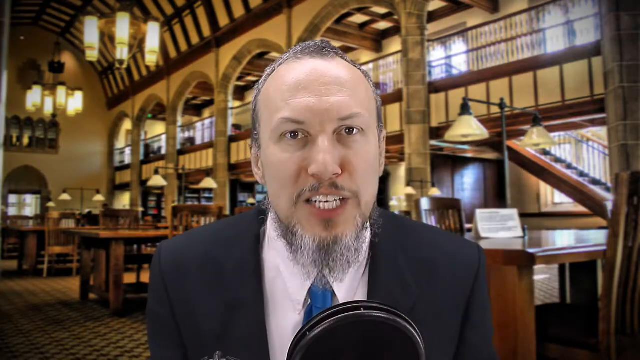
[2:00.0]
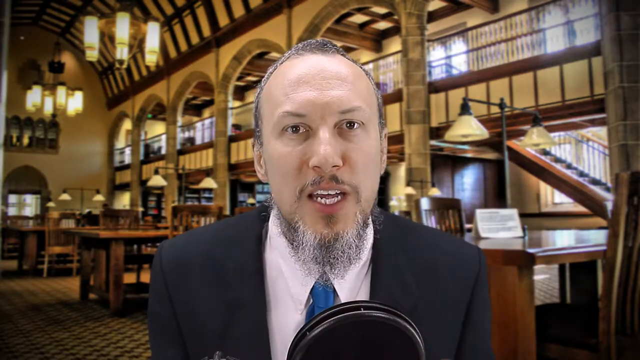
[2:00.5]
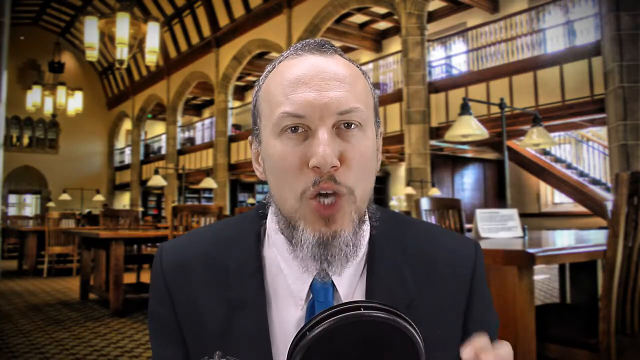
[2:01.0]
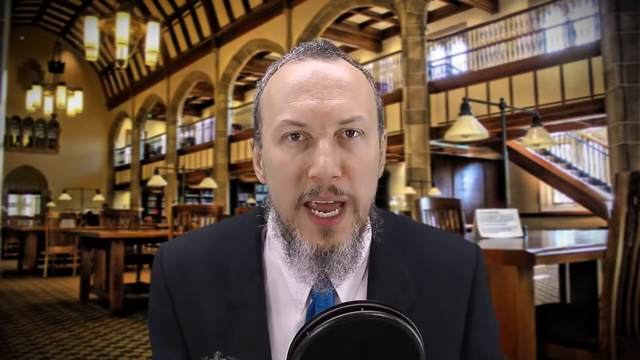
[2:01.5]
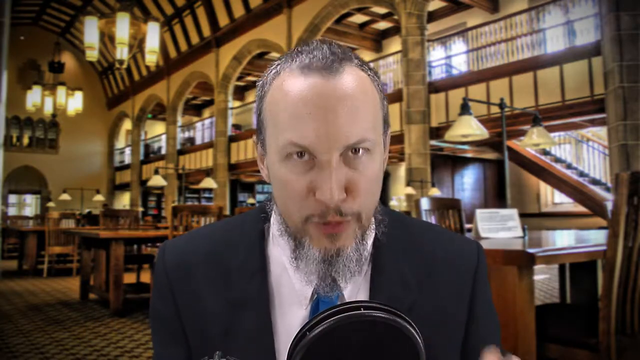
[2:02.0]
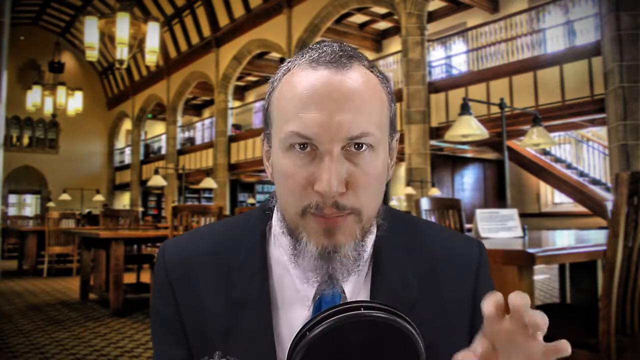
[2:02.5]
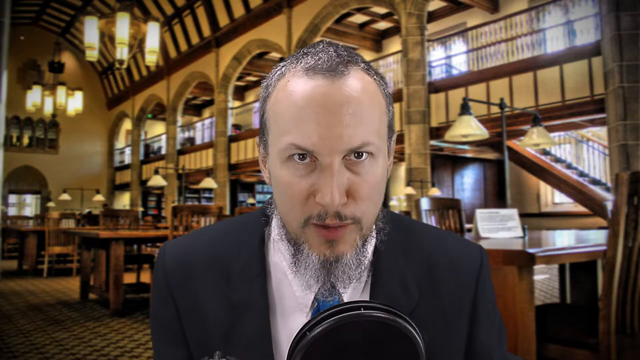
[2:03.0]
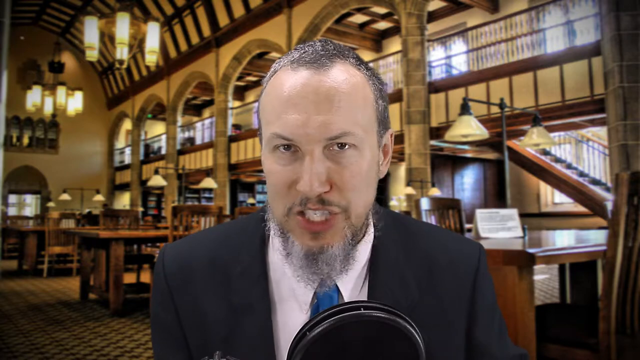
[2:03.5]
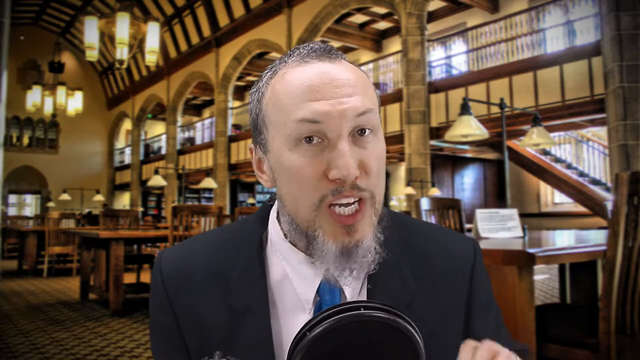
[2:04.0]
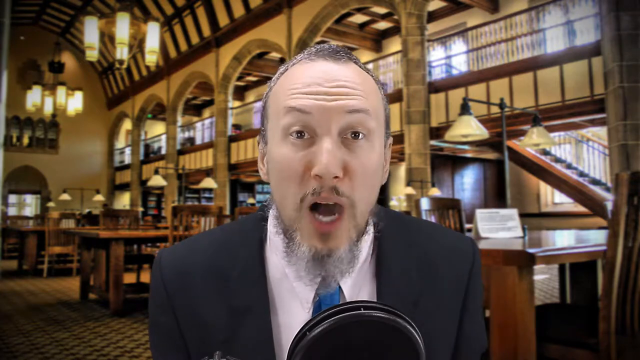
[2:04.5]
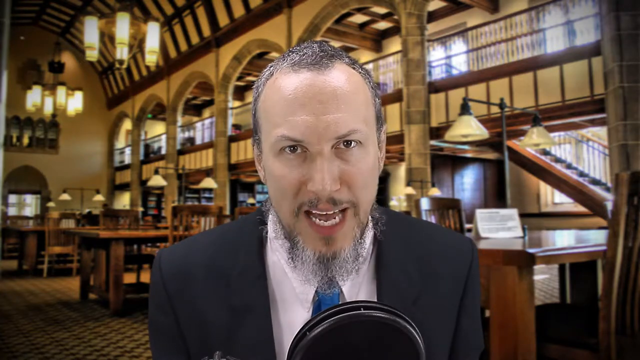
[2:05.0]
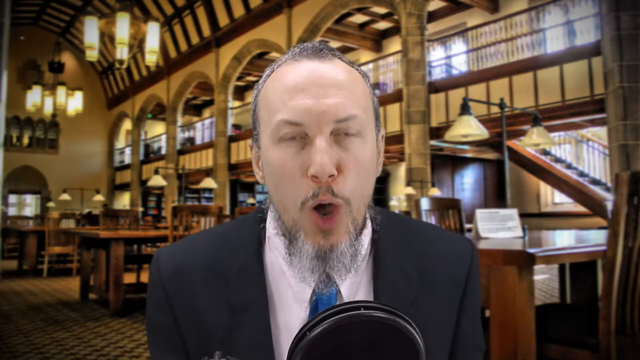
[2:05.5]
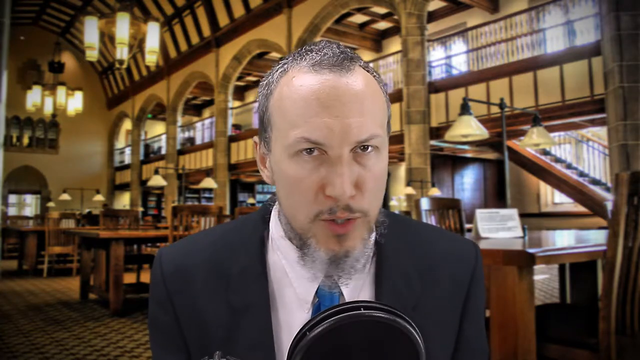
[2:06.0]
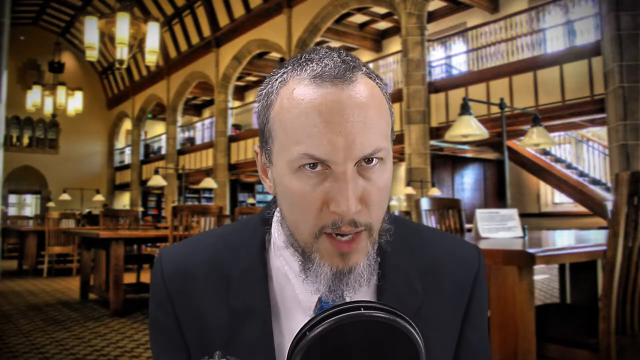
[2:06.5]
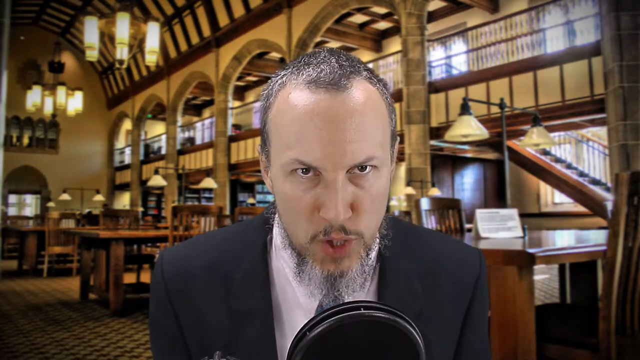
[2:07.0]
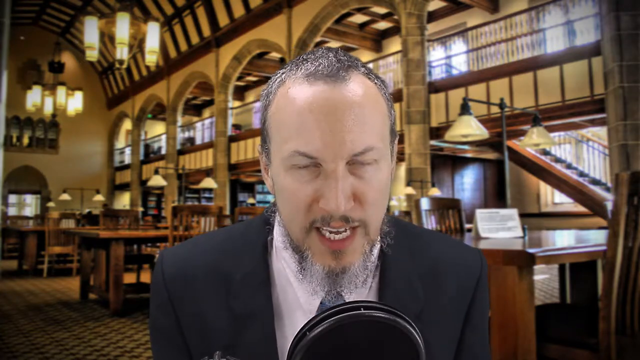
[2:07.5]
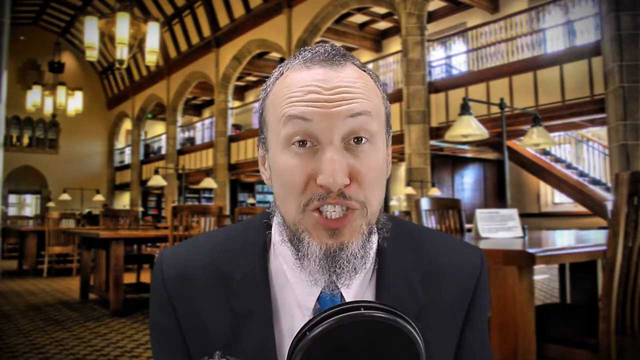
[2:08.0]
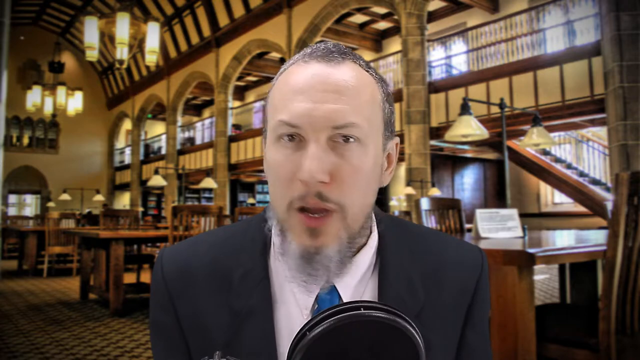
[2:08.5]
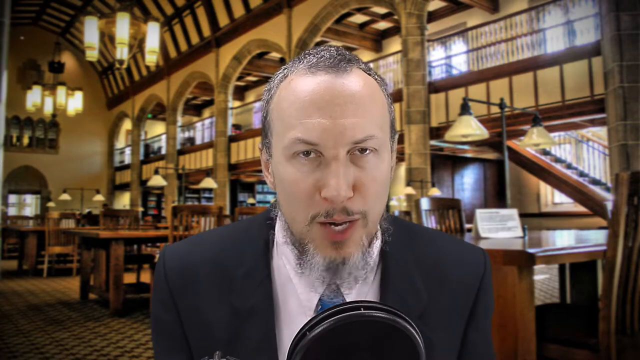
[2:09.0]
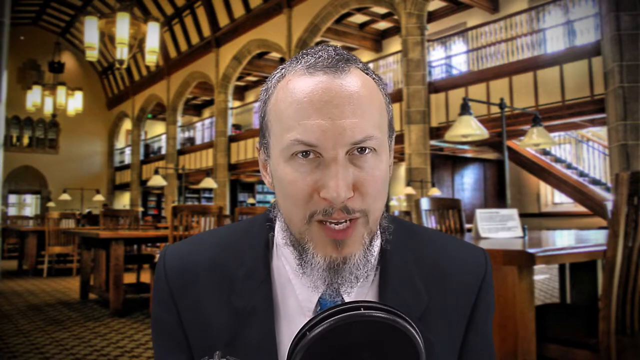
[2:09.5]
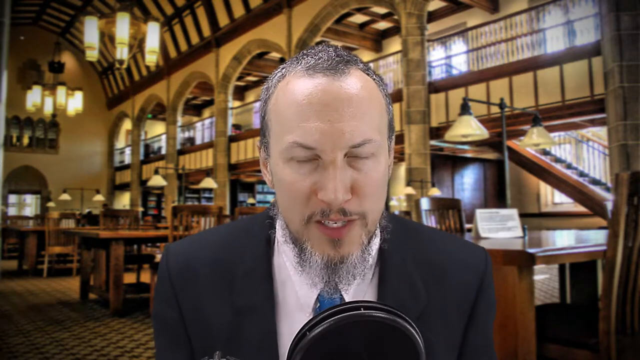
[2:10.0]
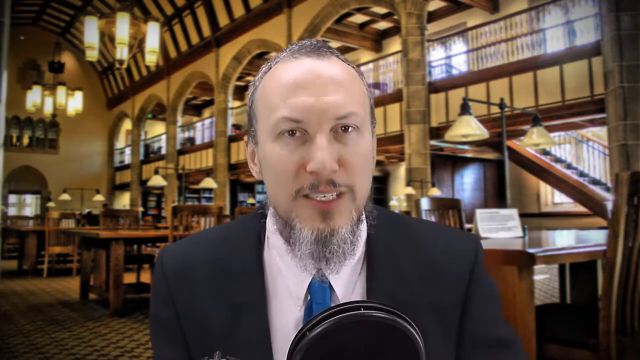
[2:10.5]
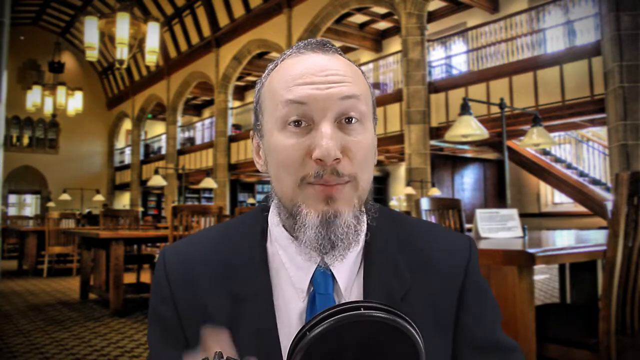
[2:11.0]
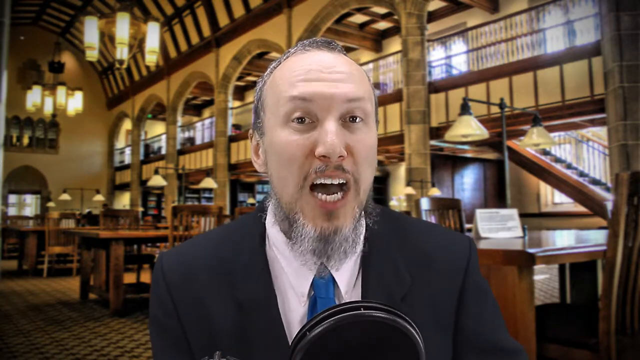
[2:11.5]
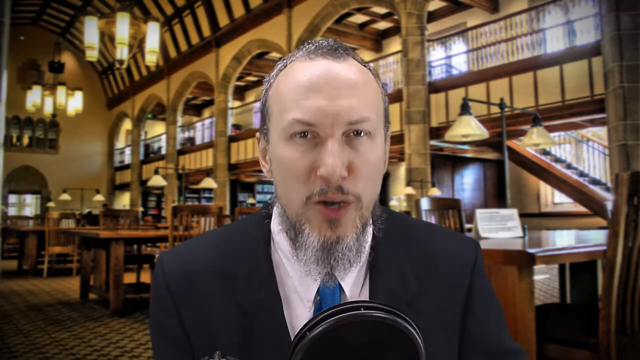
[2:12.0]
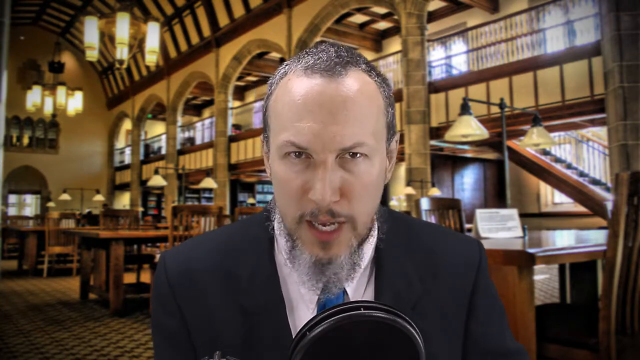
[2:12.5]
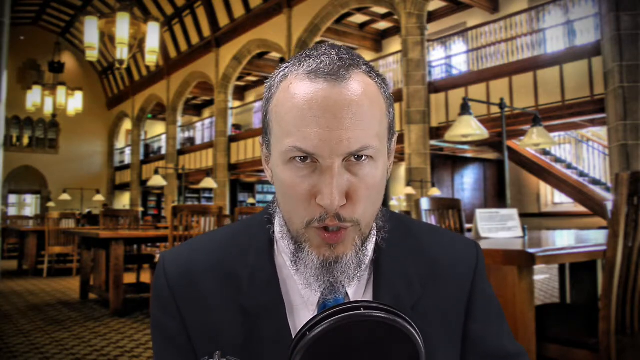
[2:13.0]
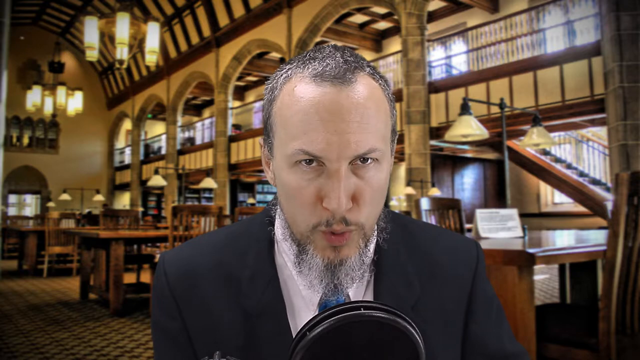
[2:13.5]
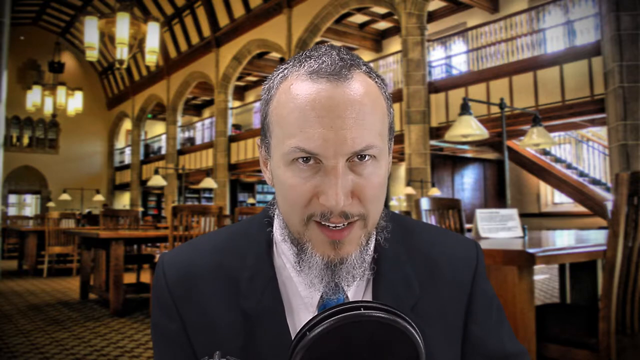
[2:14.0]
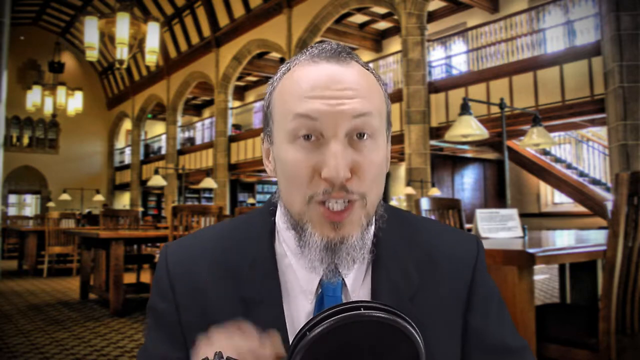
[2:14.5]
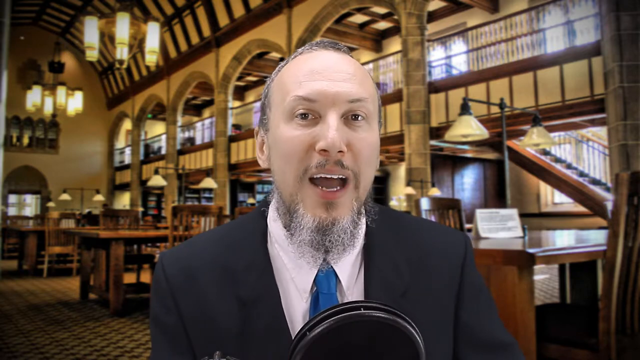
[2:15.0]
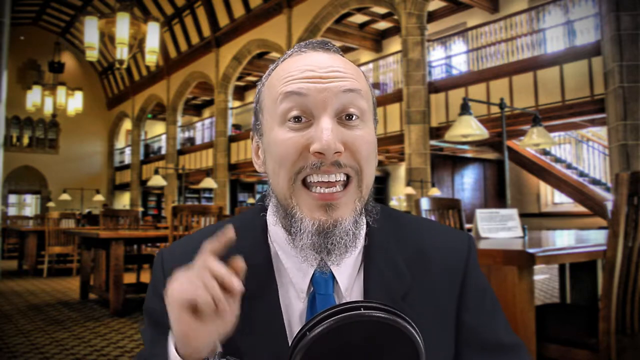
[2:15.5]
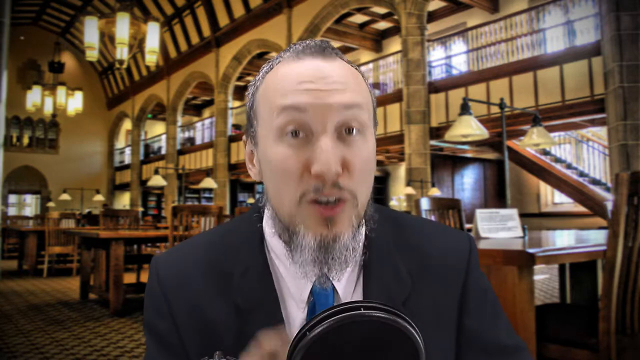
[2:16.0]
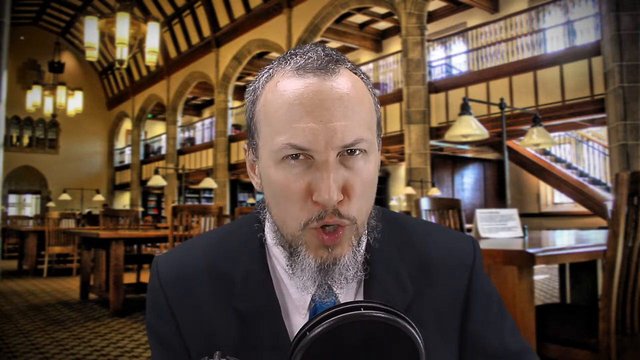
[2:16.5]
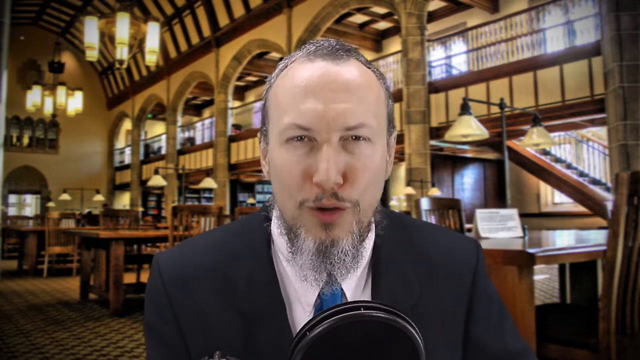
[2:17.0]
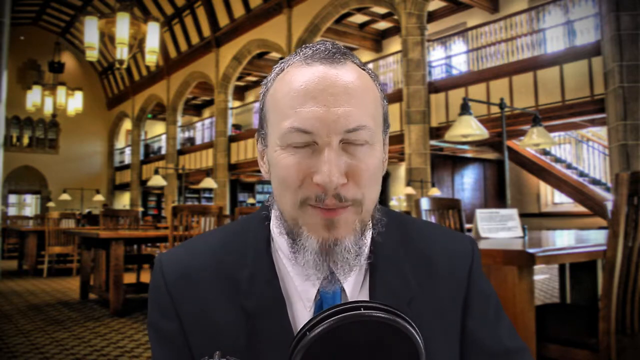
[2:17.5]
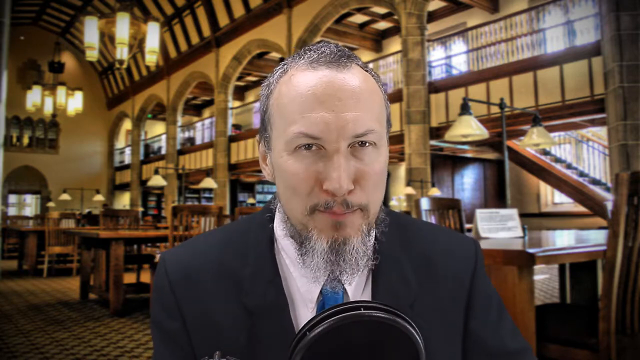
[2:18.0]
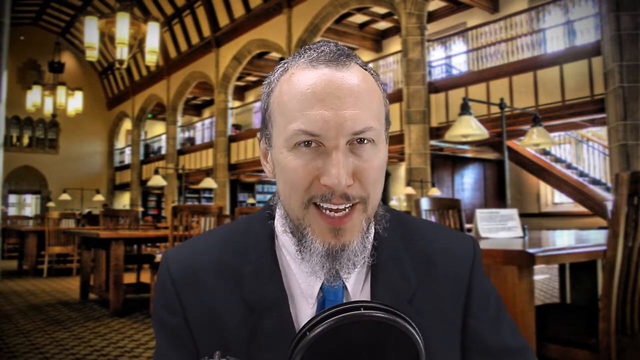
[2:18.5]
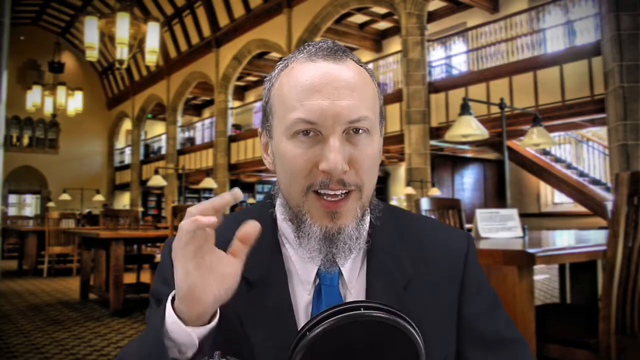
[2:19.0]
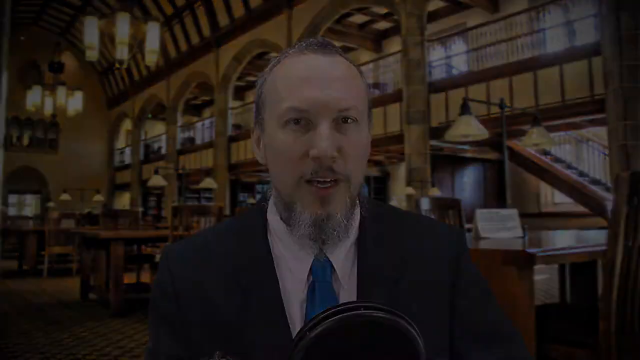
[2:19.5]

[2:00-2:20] A young man is in the center of the screen. He has thinning, mostly gray hair on top, a thinning beard that is mostly gray, and a very thin mustache, and he only looks to be about 35 years old. He wears a dark-colored suit with a white shirt and a very vibrant bow tie, and he speaks into a large round microphone in front of him whose diameter looks to be about six inches. The background shows what looks like a two-story study area with large cathedral ceilings and large chandeliers hanging from the ceiling; the floor level has bookshelves and the top level has study areas and quiet places to use laptops. The man in the foreground talks slowly and determinedly, making sharp facial expressions, leaning his head forward and looking upward.